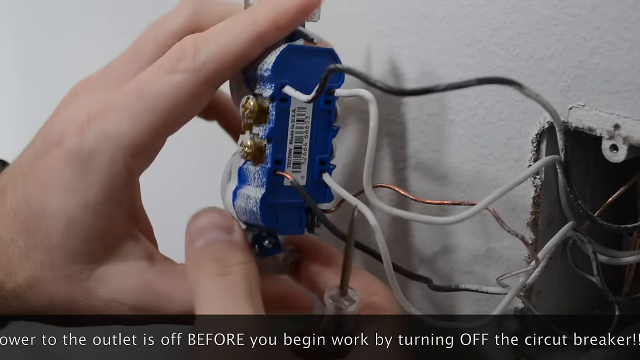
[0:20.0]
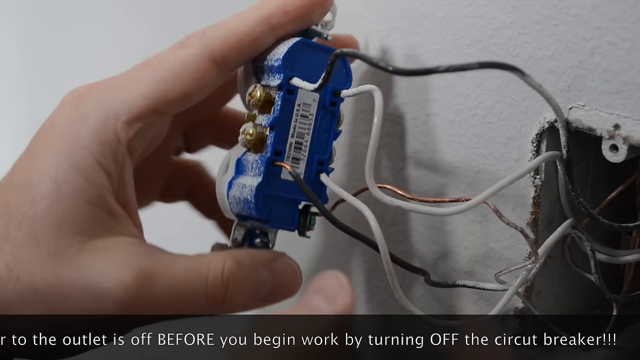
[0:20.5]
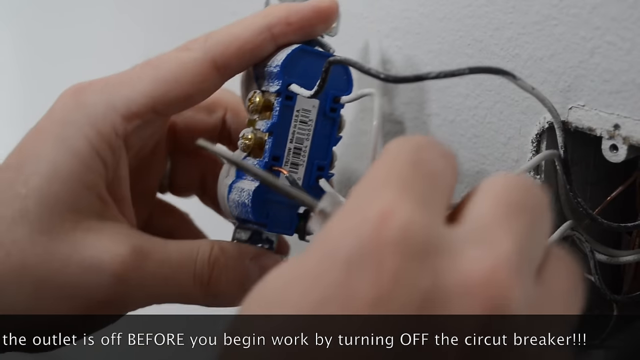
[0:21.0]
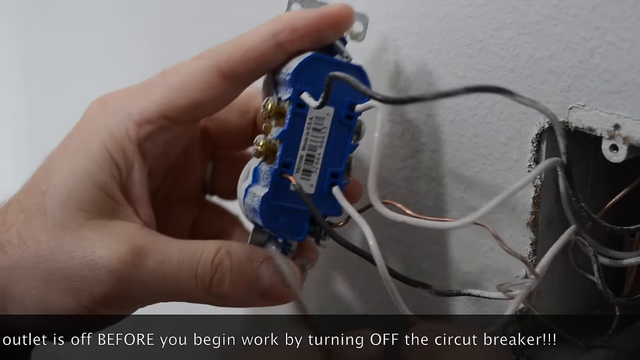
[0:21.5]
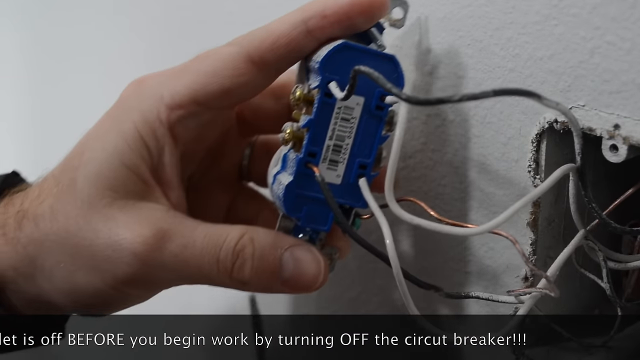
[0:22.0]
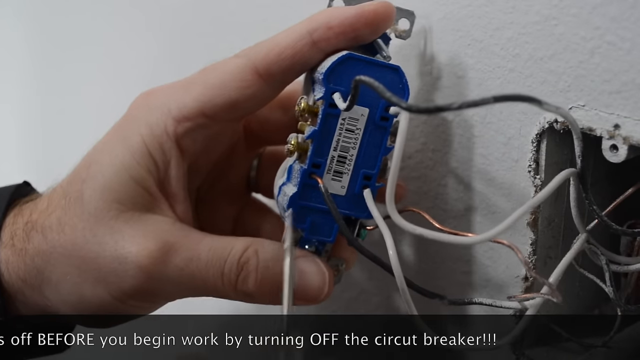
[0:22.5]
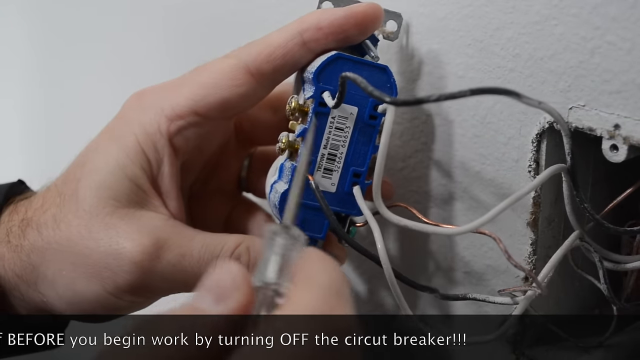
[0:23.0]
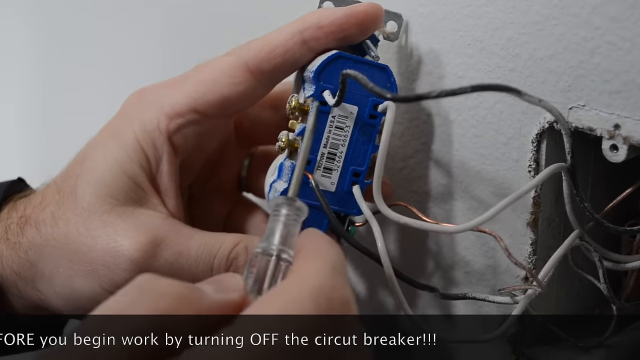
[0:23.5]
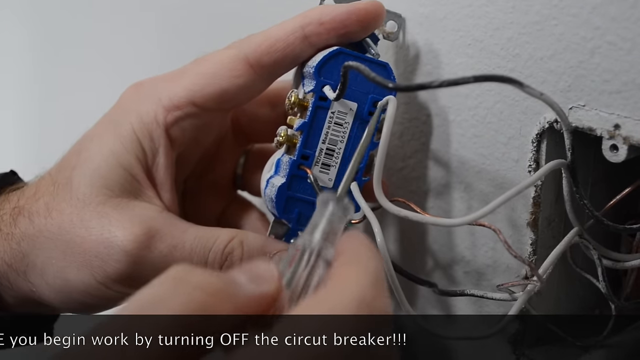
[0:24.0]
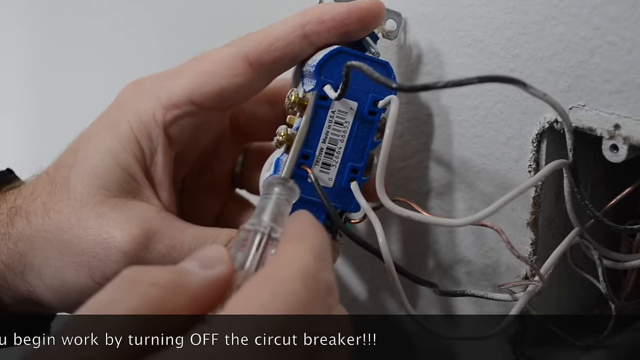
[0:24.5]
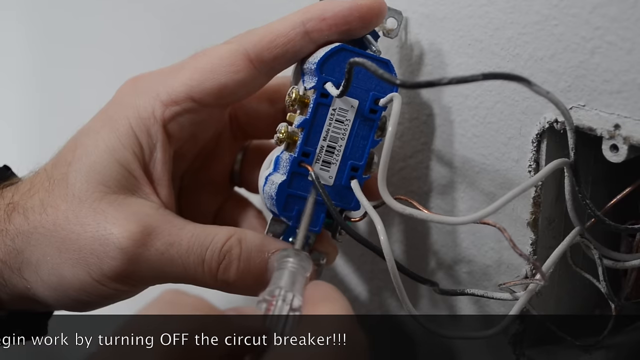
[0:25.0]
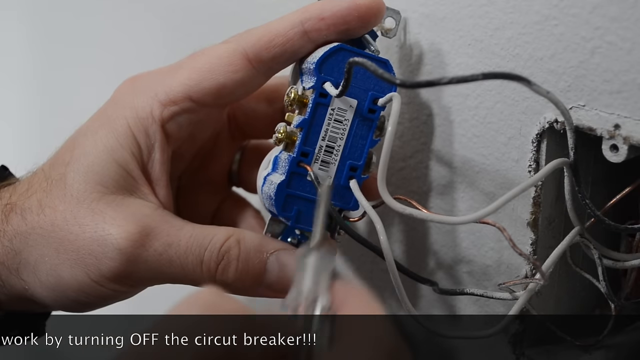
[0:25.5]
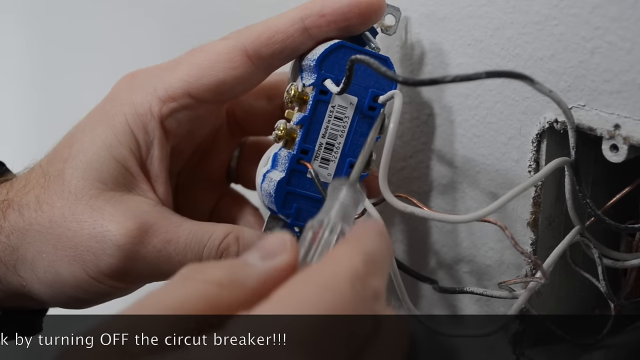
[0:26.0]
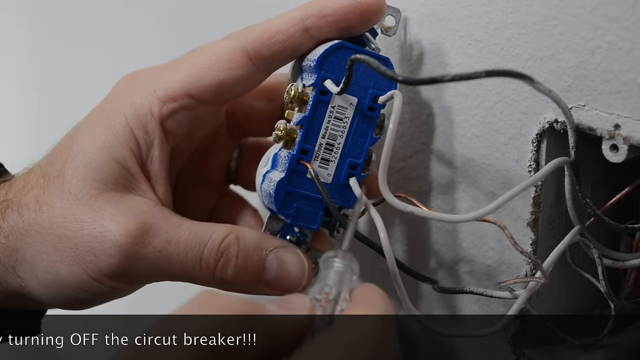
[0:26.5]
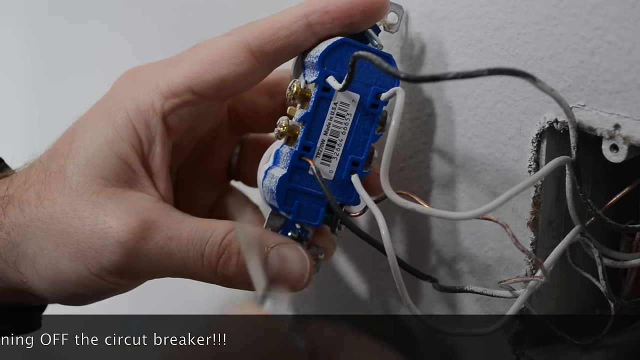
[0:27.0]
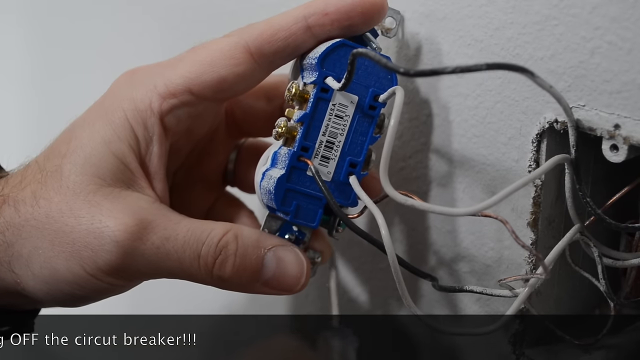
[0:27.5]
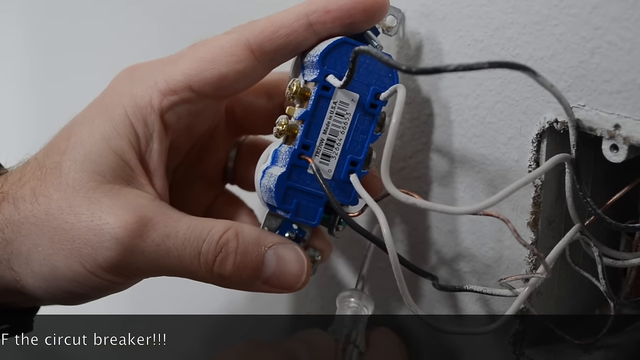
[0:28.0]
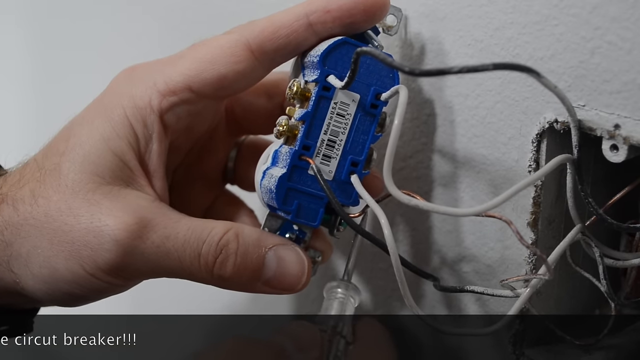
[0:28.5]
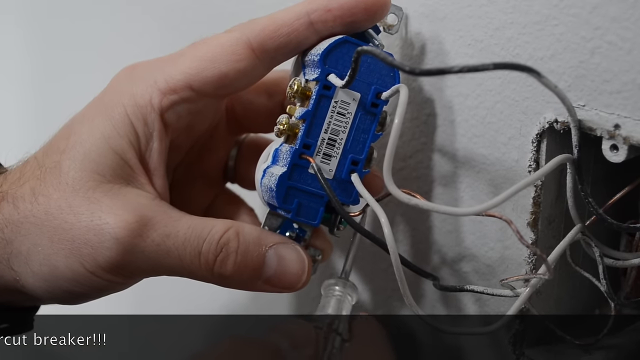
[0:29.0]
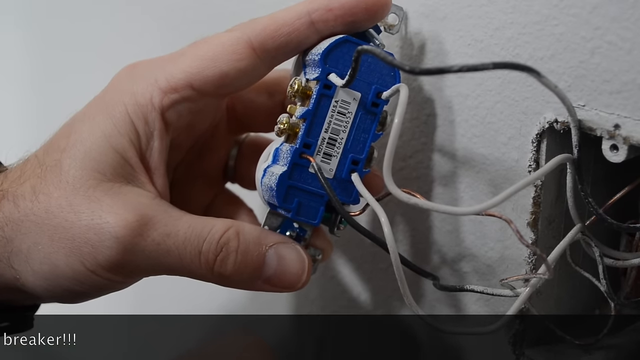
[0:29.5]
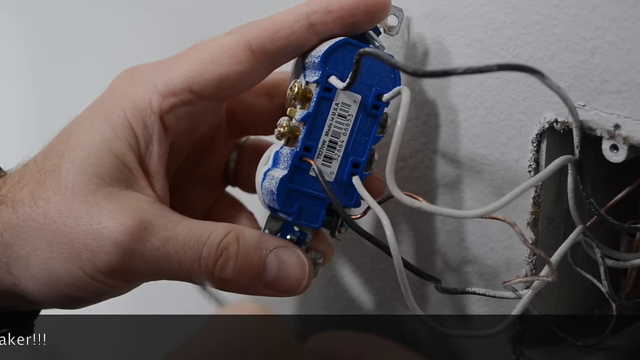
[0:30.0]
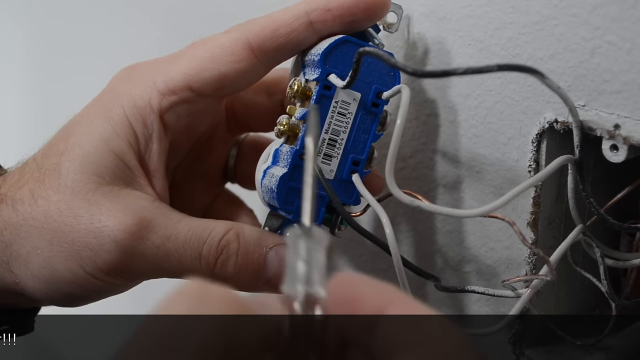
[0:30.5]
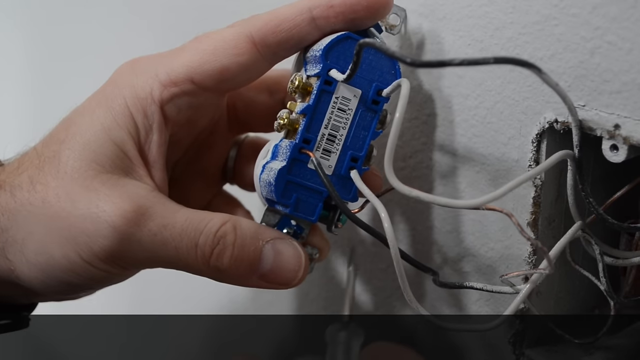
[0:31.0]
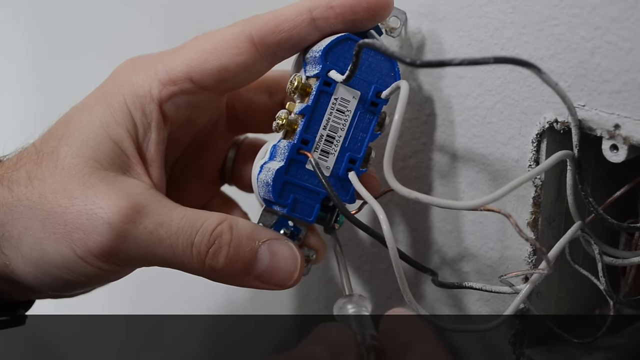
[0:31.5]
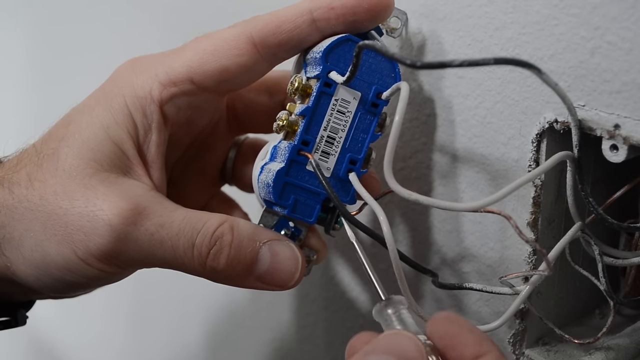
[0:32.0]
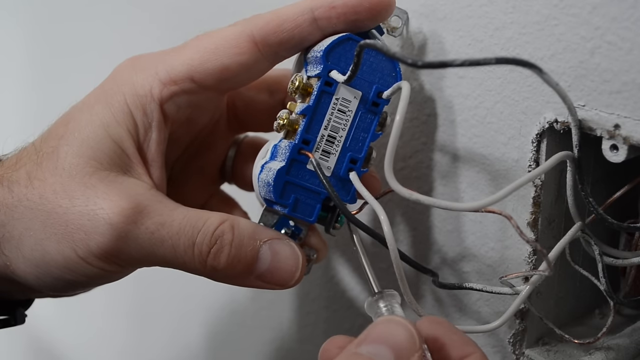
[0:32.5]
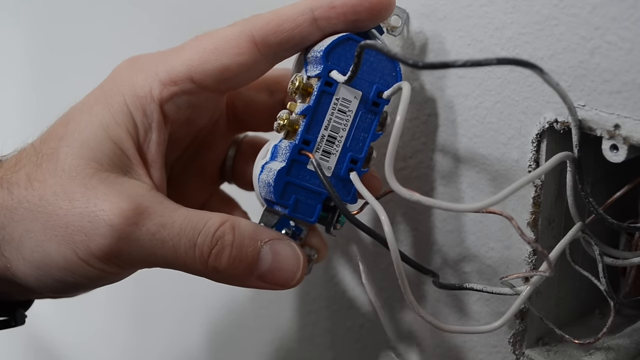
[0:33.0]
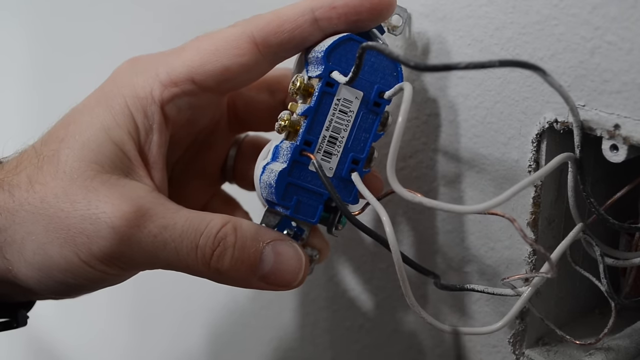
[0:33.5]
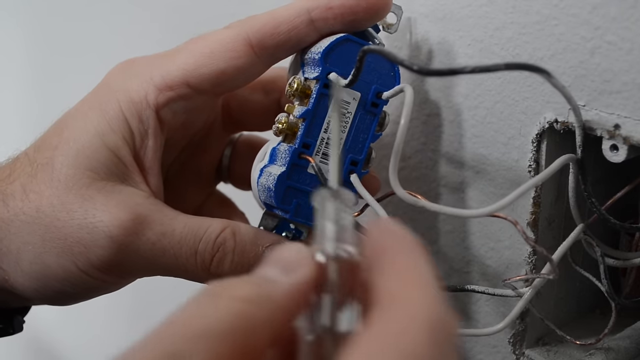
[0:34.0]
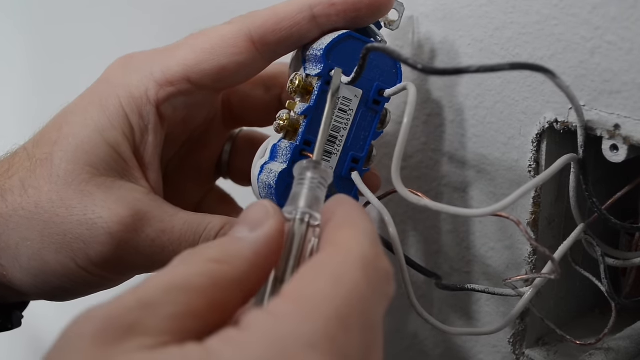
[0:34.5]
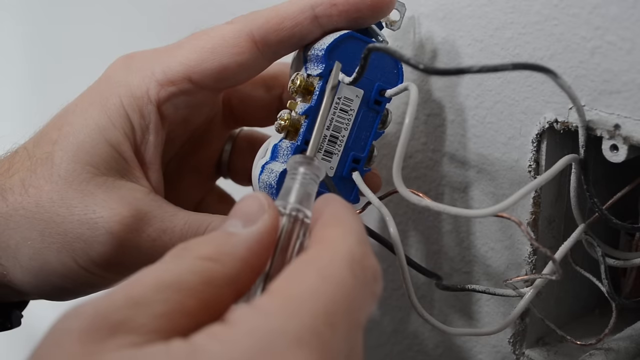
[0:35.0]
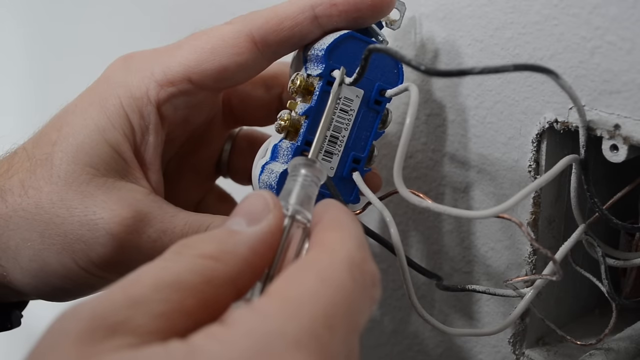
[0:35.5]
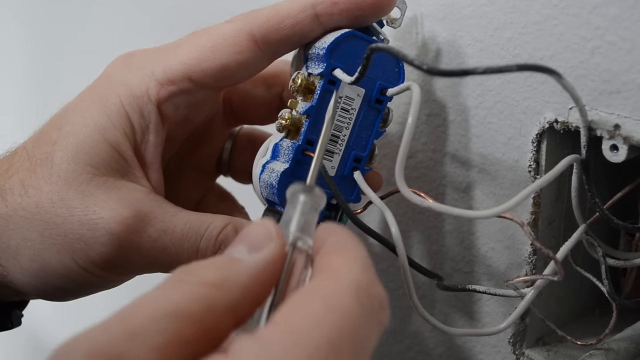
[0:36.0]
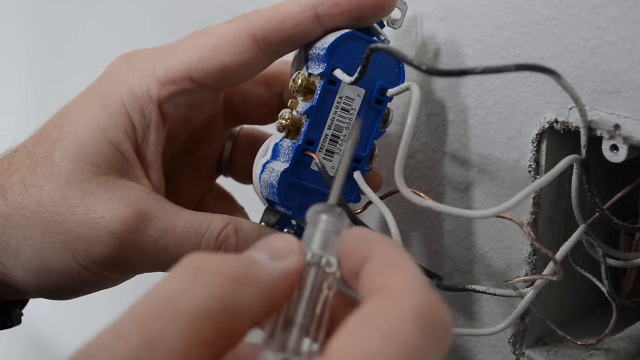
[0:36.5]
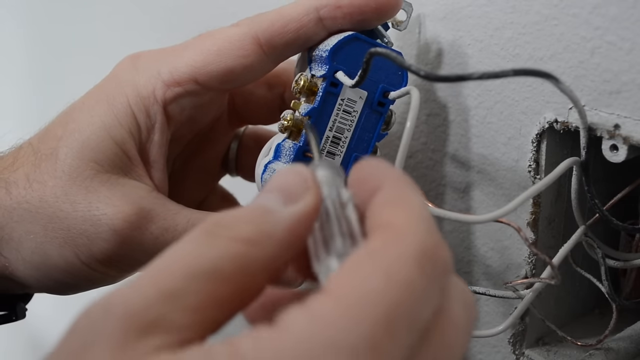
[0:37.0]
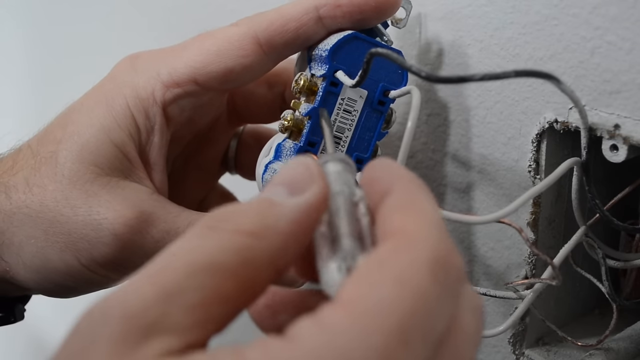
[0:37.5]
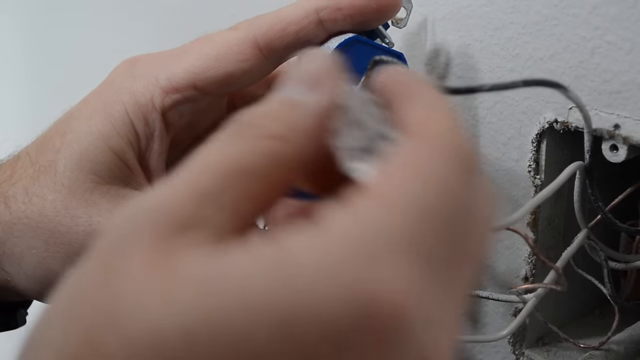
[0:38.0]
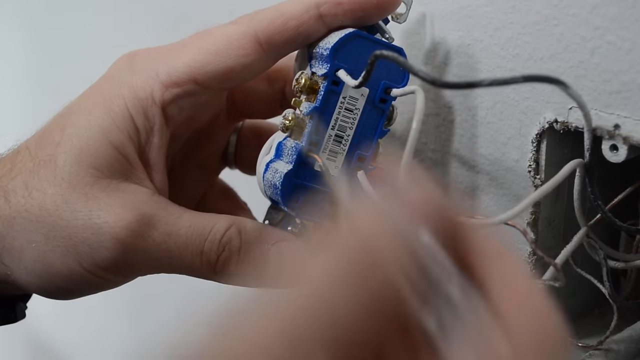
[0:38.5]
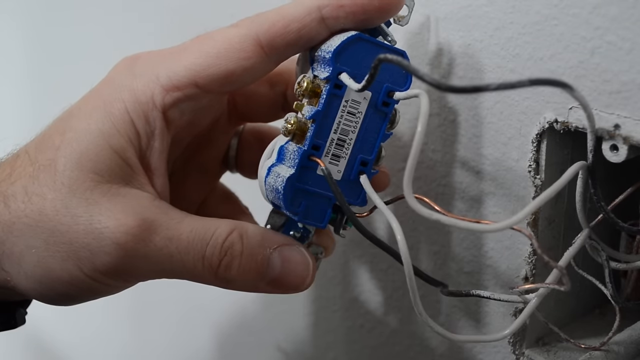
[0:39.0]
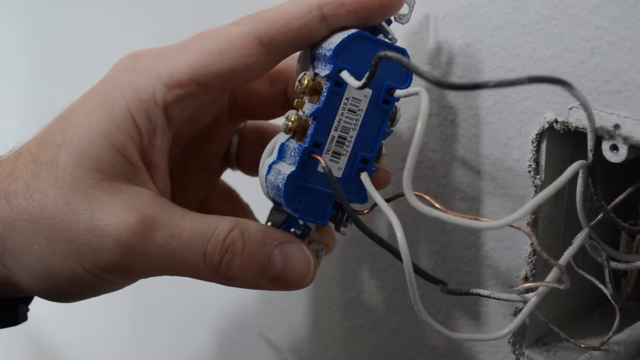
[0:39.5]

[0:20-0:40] The man continues the demonstration, holding a screwdriver as he works on the wires, which are still stuck in the device. The warning about switching off the circuit breaker before starting work is shown. There are two screws, which are unscrewed as the first step.